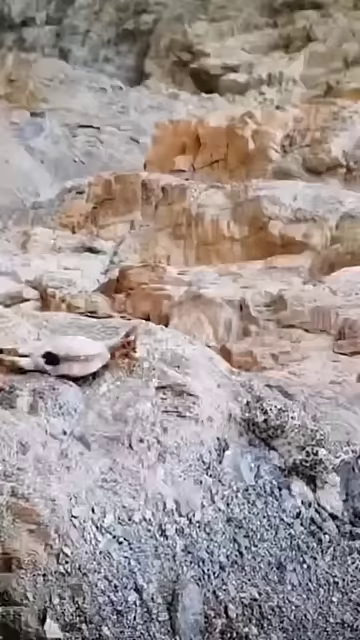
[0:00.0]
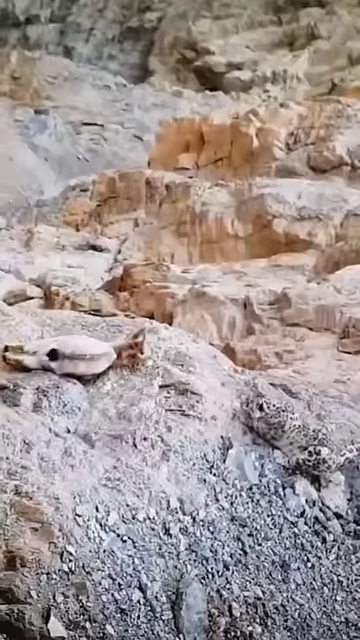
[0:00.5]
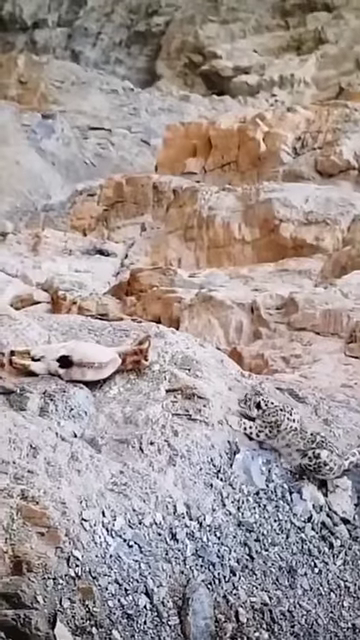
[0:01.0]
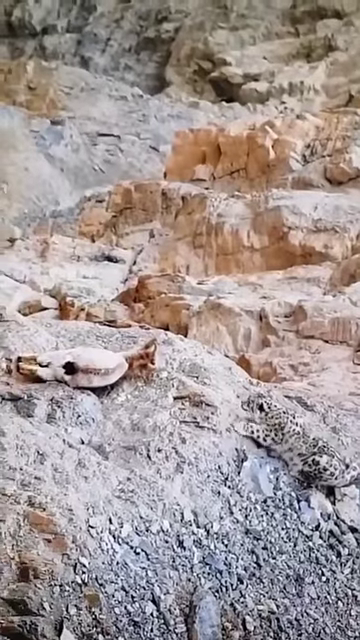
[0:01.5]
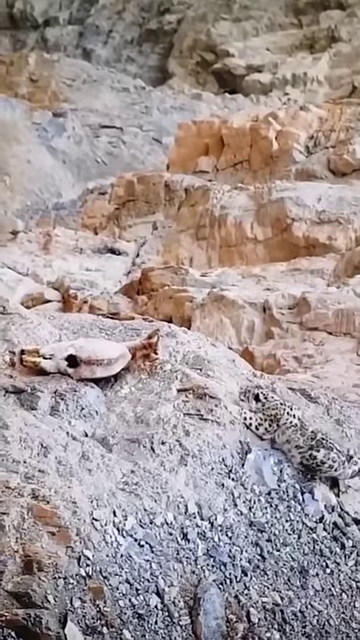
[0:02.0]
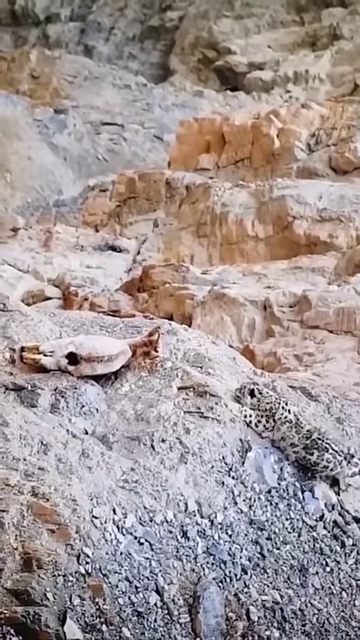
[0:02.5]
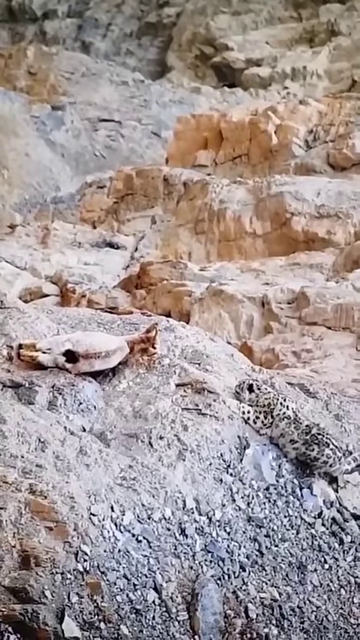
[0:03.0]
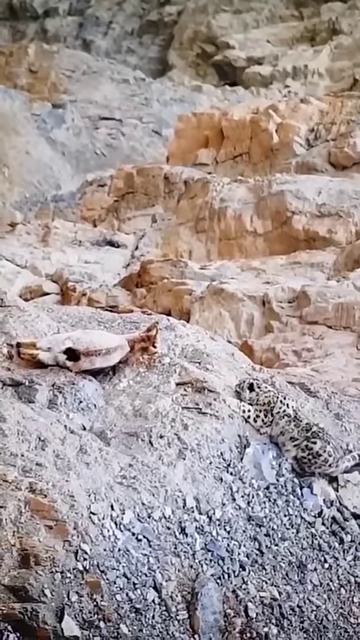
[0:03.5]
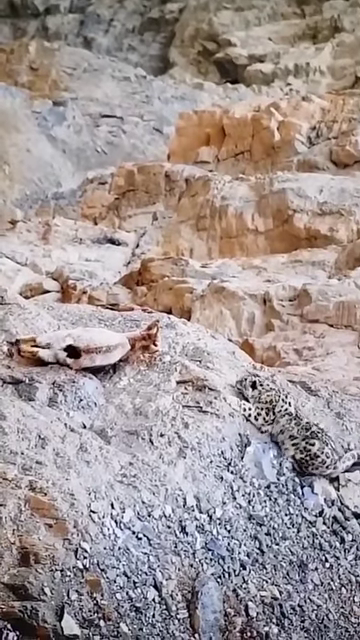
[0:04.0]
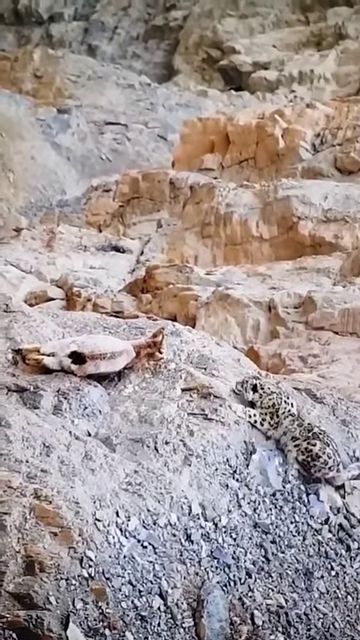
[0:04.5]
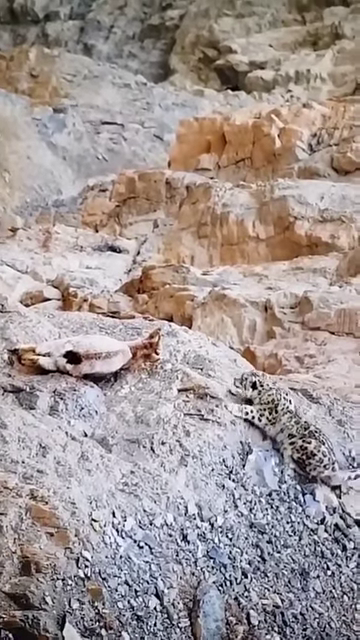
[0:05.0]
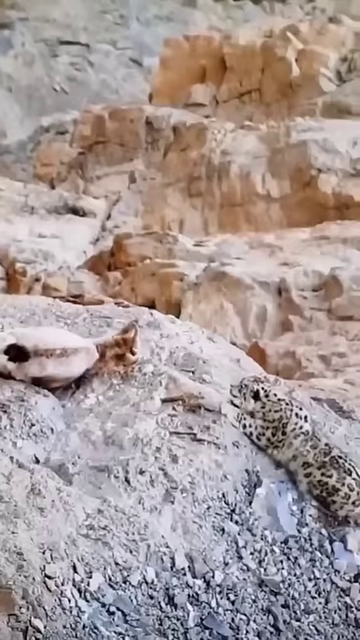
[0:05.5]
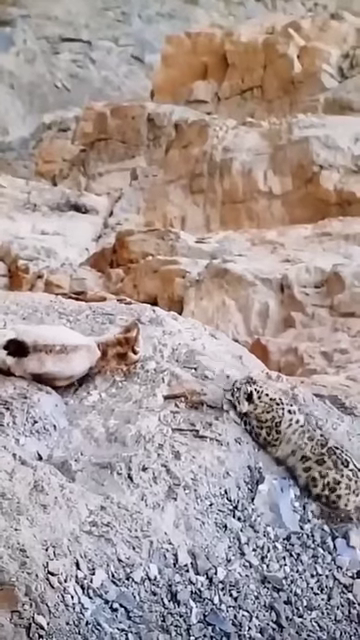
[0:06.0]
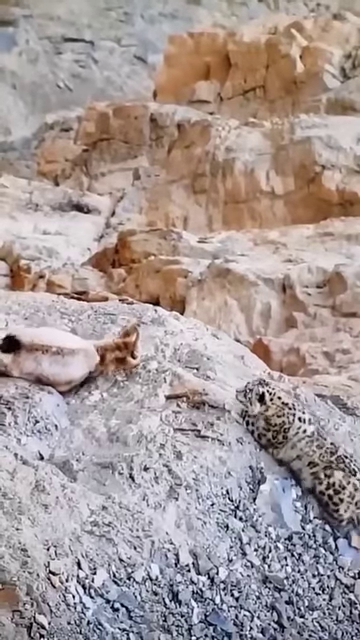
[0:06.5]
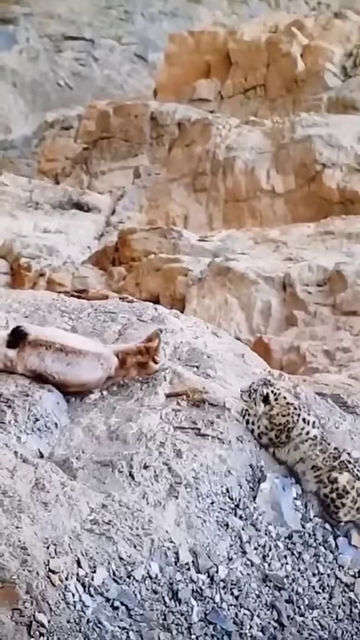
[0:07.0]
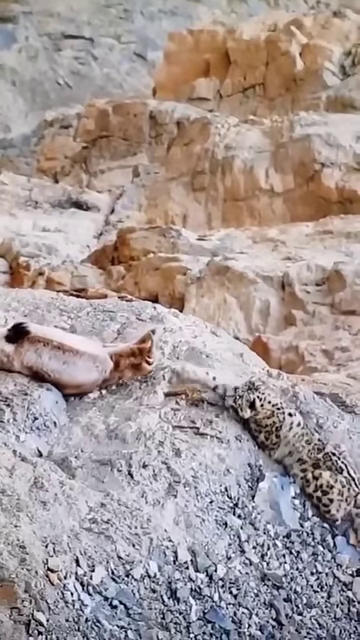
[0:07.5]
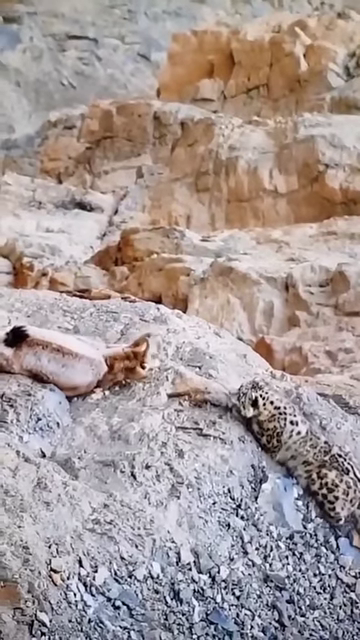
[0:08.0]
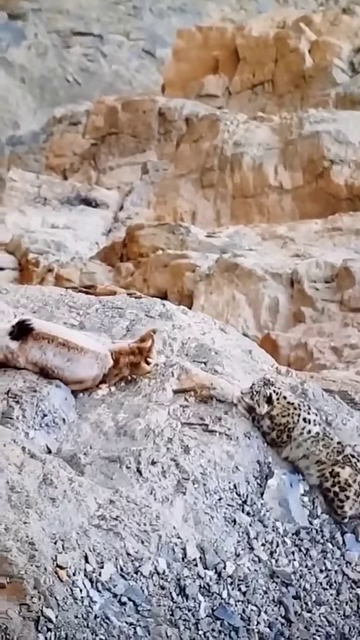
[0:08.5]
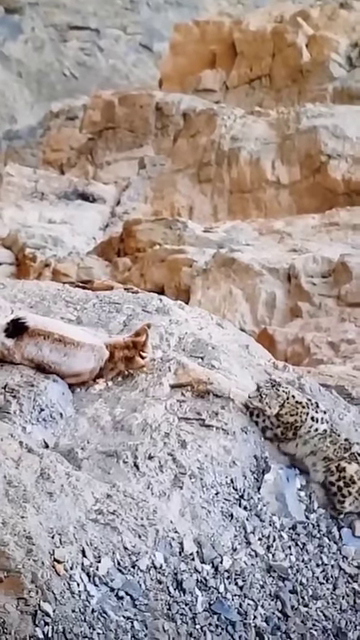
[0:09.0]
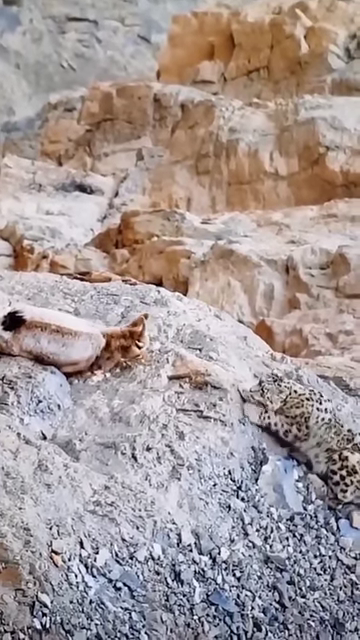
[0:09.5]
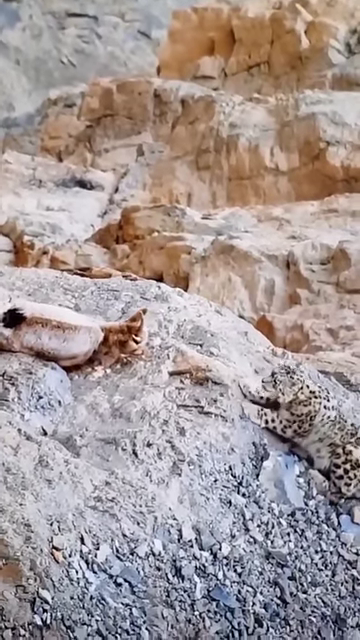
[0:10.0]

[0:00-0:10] Outdoors on a rocky mountainside, there appears to be no grass or shrubs, just rocks. Most of the rocks are gray, but in the background a rock rise looks more orange, reddish. The scene shows an encounter between a snow leopard and what seems to be a mountain goat. The mountain goat is lying on the rocks on its side with its head to the right, facing right, and looks like it may have been taking a short nap. It does not appear to be injured, though this is hard to say. Just to the right of the mountain goat is a short incline, where the snow leopard is kind of hanging out. The snow leopard is very interested in the mountain goat and keeps reaching out with its paw to try to touch it. The mountain goat keeps kind of moving its head away but is otherwise really unbothered. The encounter is completely non-threatening and seems meant to be cute. The snow leopard is maybe a little hesitant to encroach too much, but it keeps trying and clearly wants the mountain goat's attention. There are no other animals in the scene.